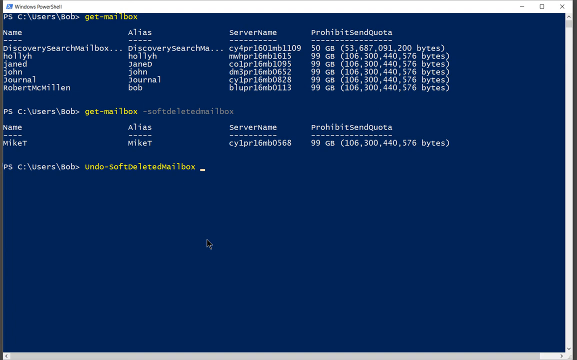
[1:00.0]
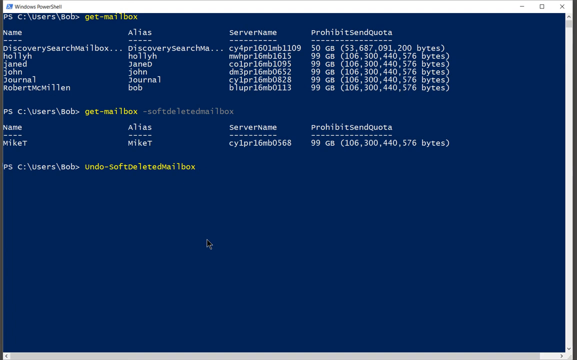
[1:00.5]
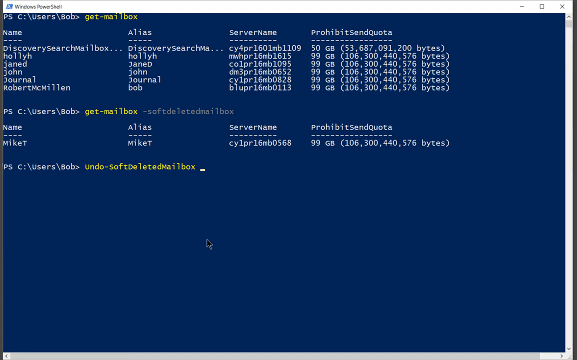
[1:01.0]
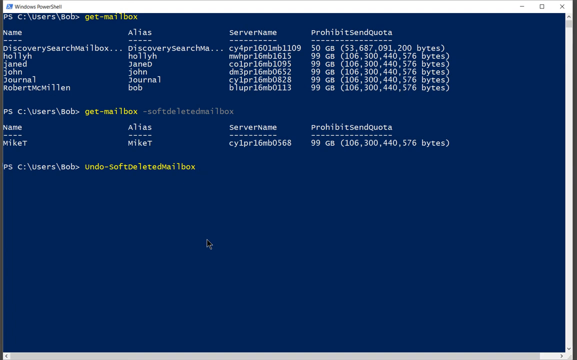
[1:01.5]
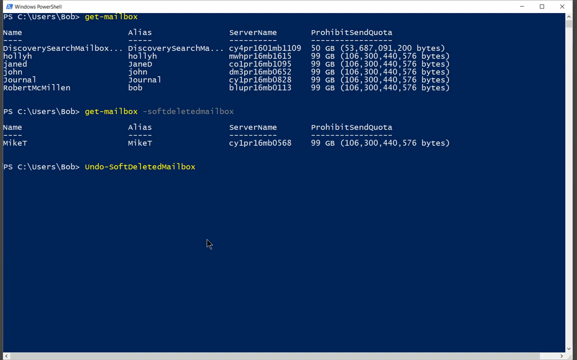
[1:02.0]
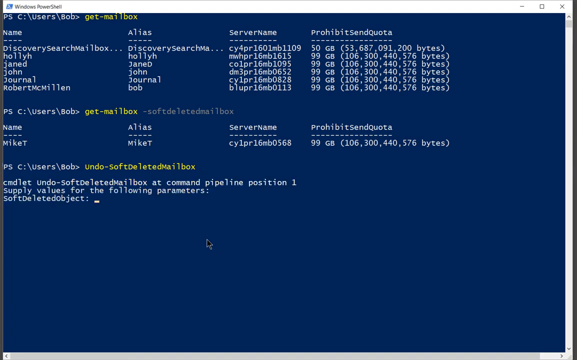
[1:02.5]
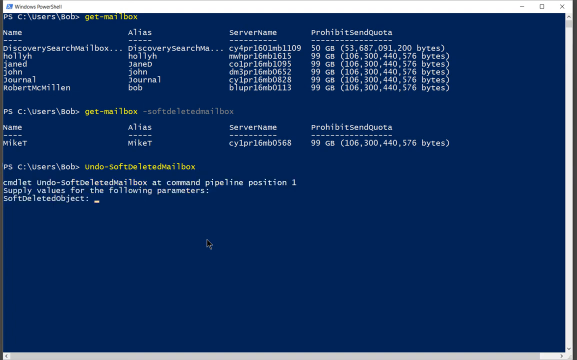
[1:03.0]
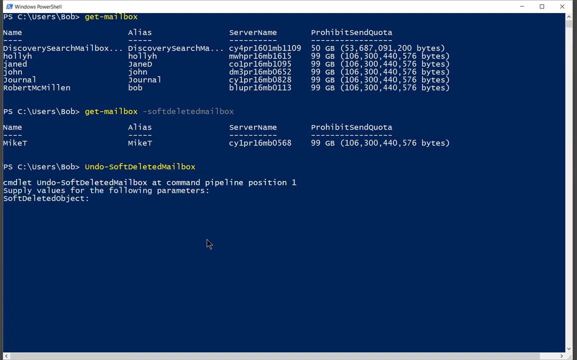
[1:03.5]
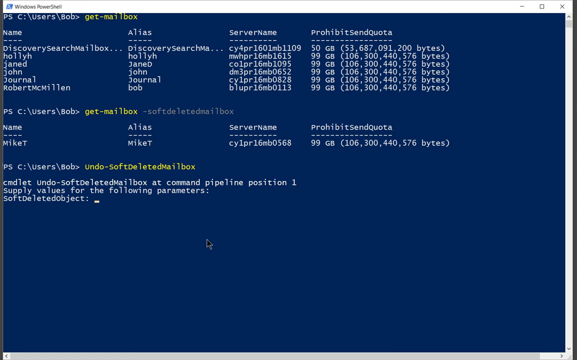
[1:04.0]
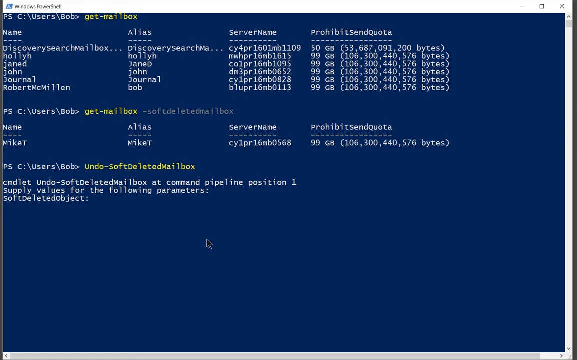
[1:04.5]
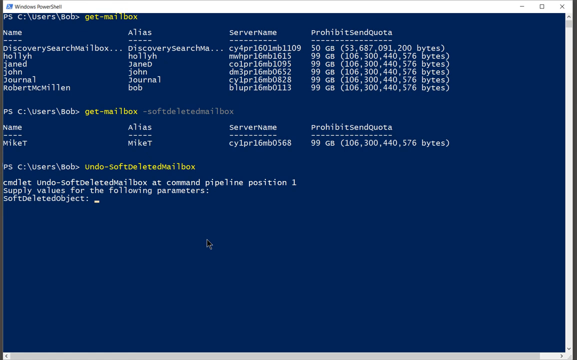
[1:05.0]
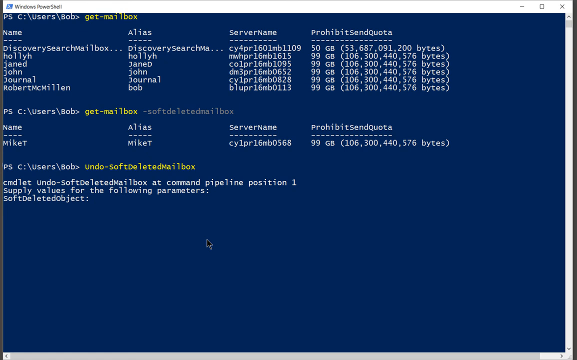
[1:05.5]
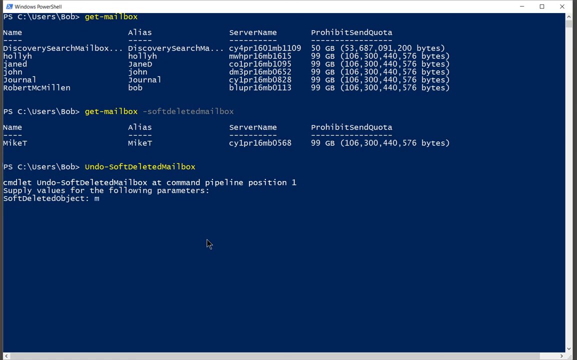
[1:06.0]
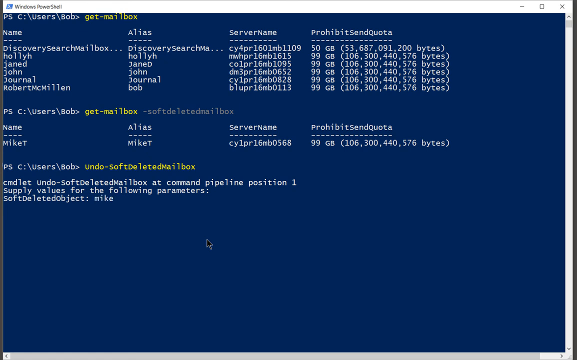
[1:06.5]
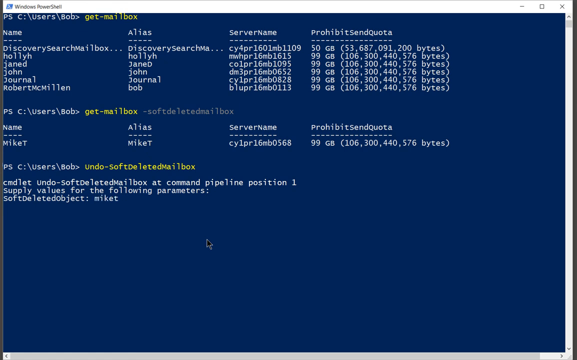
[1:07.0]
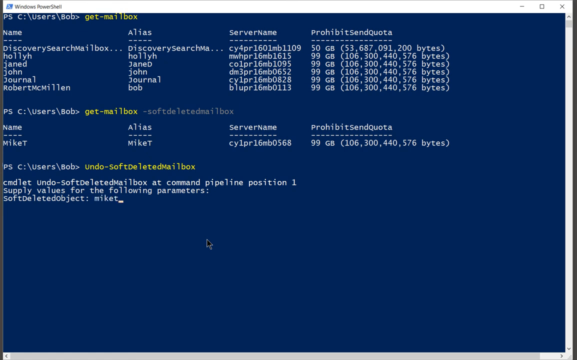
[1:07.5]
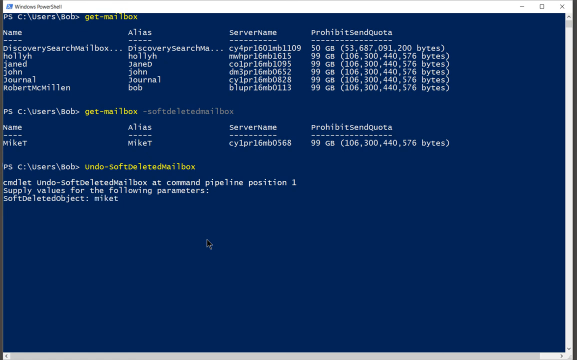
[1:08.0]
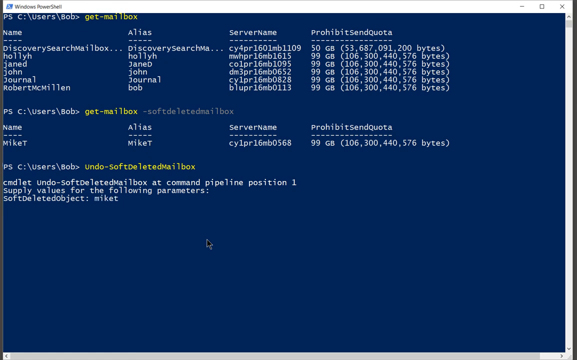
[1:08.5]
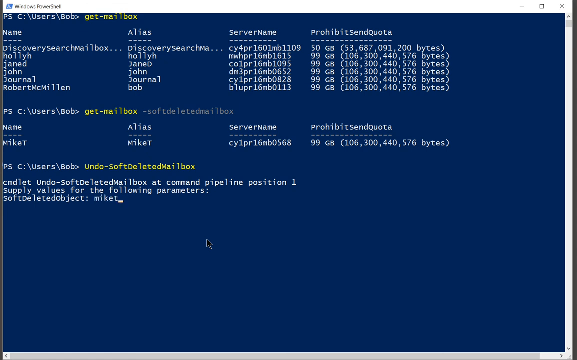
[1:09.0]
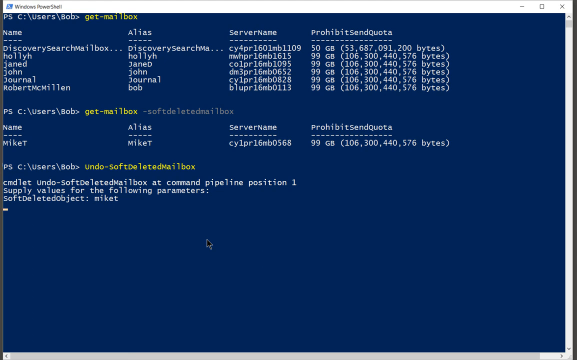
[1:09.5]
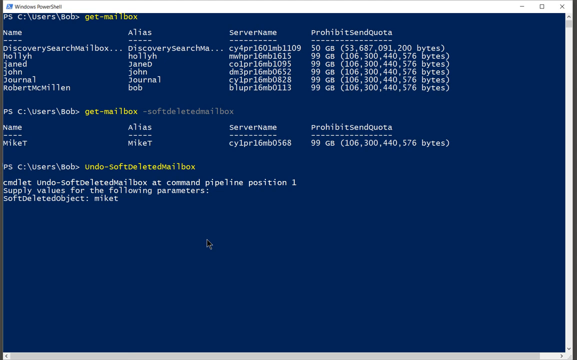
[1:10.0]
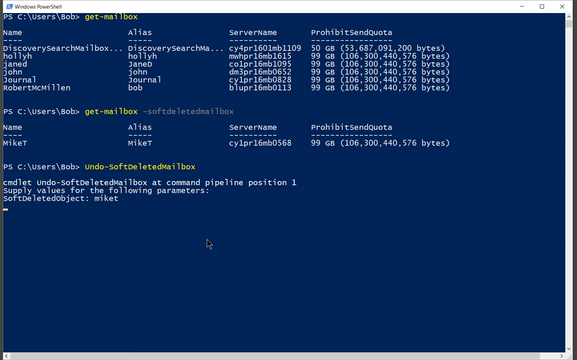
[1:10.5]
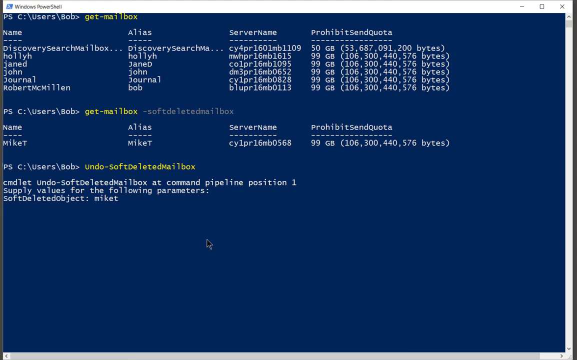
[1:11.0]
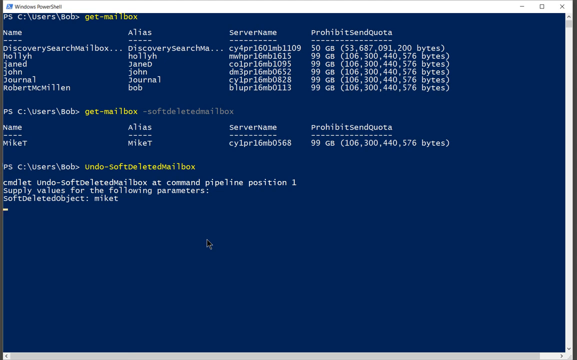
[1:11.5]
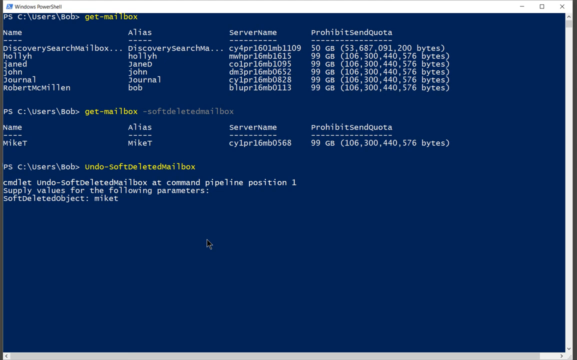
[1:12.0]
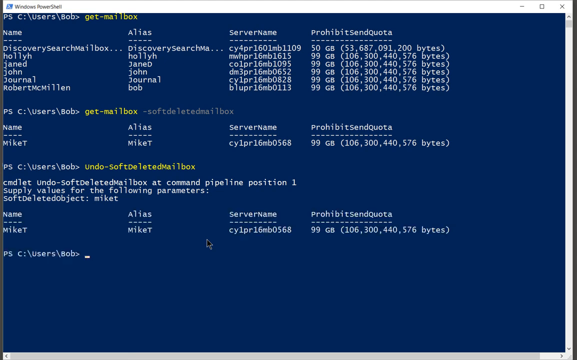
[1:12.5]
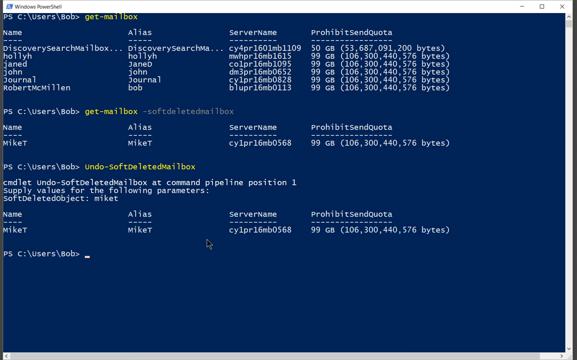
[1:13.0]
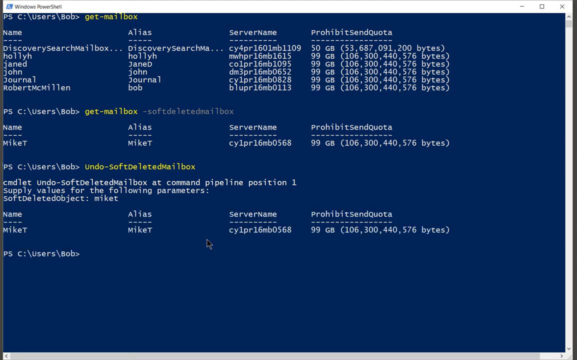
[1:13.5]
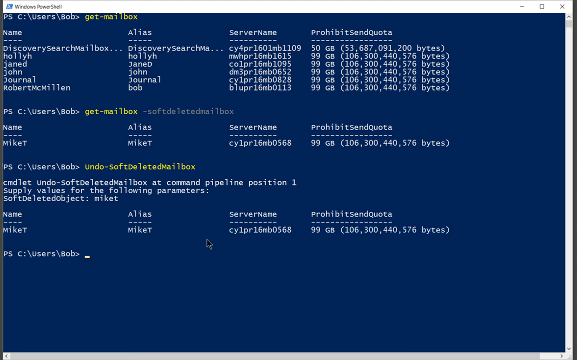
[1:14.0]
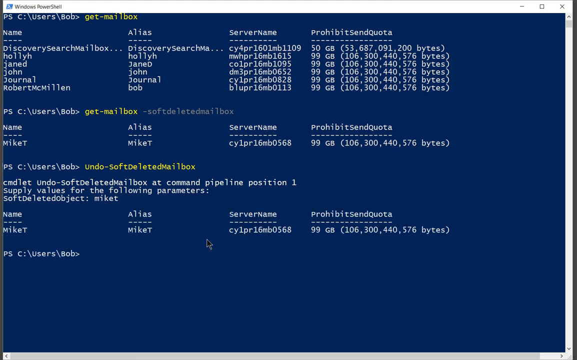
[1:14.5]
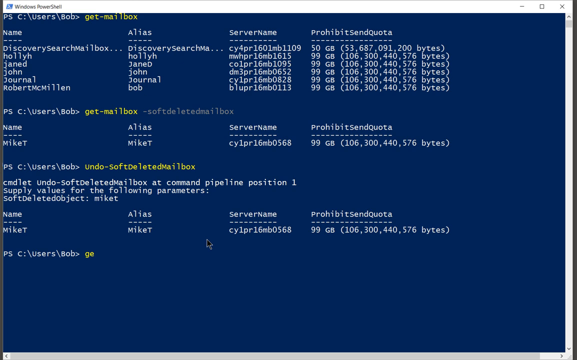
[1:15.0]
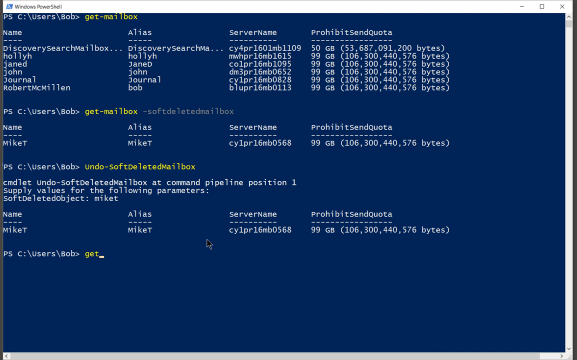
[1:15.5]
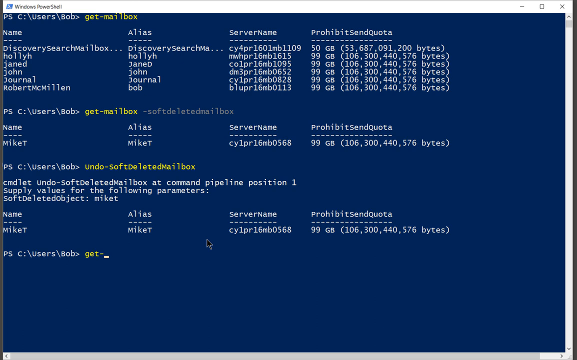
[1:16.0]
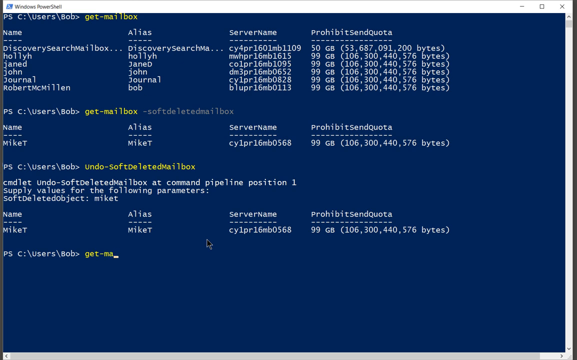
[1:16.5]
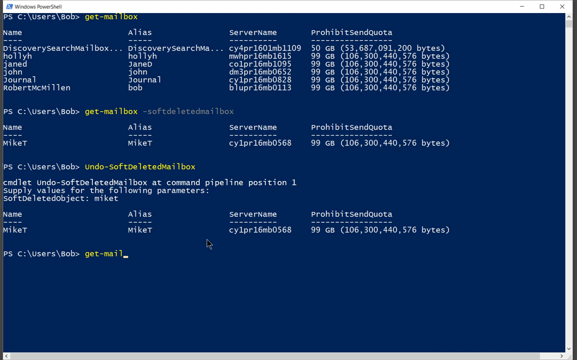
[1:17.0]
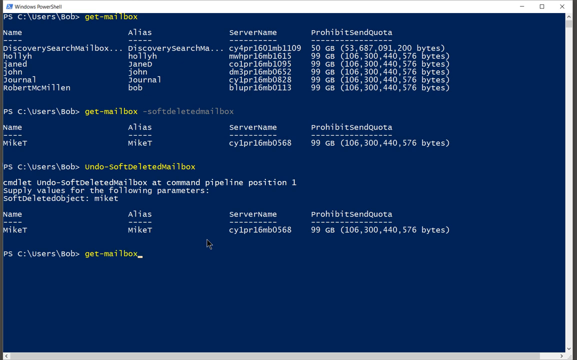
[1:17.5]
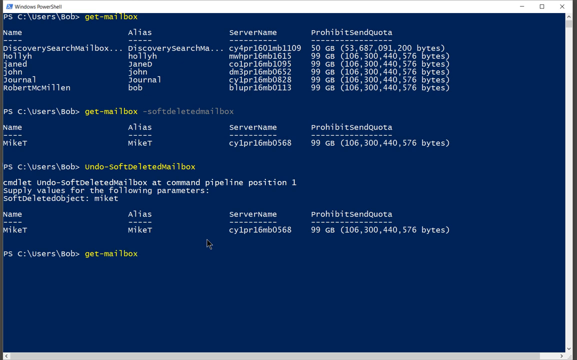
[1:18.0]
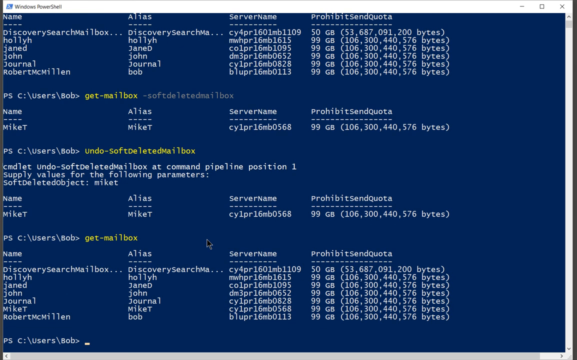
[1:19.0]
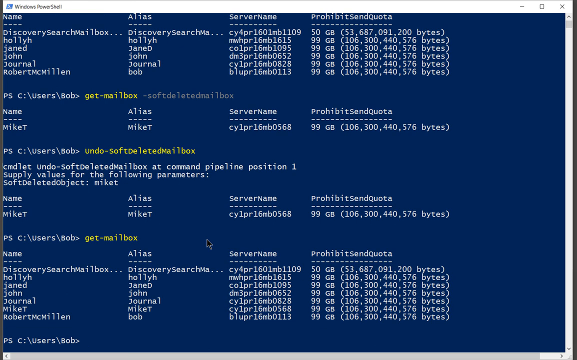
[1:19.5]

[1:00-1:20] More code is added, including the text "Supply values for the following parameters". More names keep being added to each list, and some of the names are repeated. Numbers are visible. The view moves down through the code, which is written in white on a blue background, with some parts highlighted in yellow.